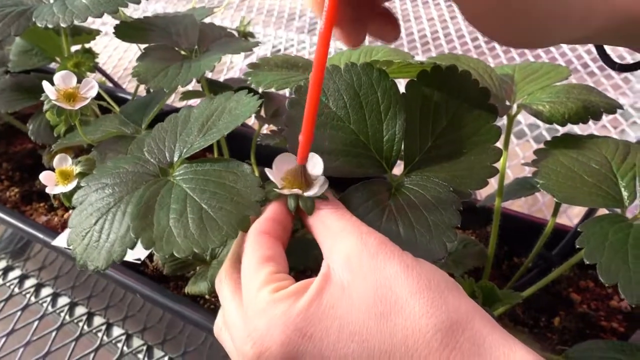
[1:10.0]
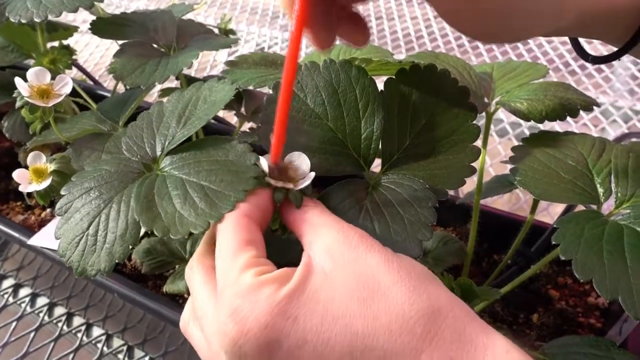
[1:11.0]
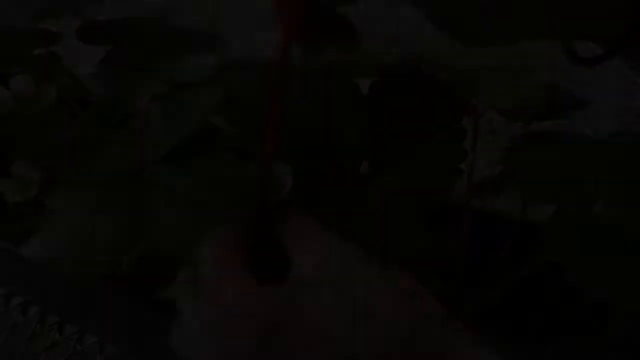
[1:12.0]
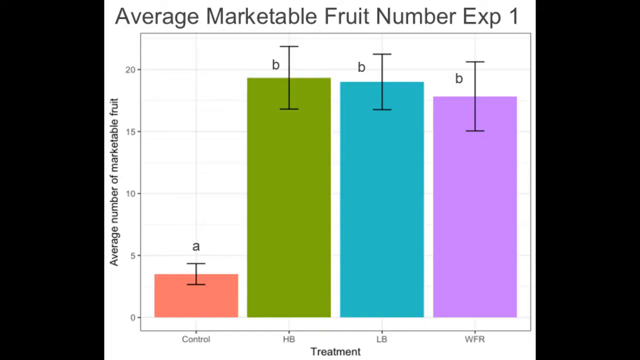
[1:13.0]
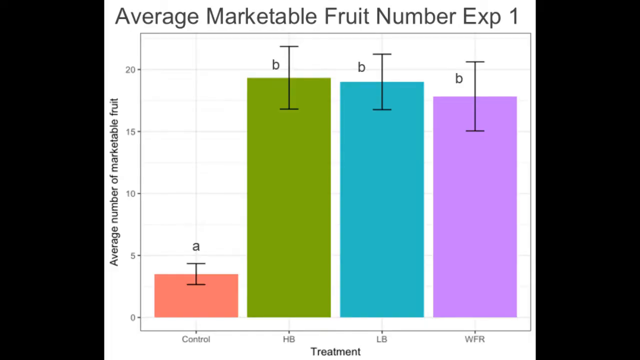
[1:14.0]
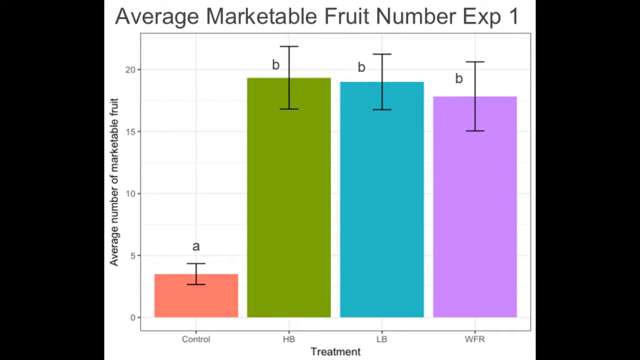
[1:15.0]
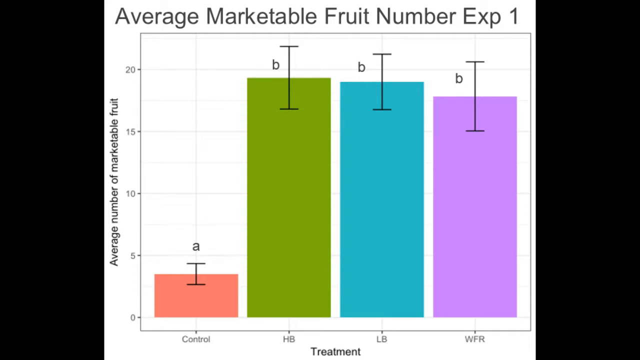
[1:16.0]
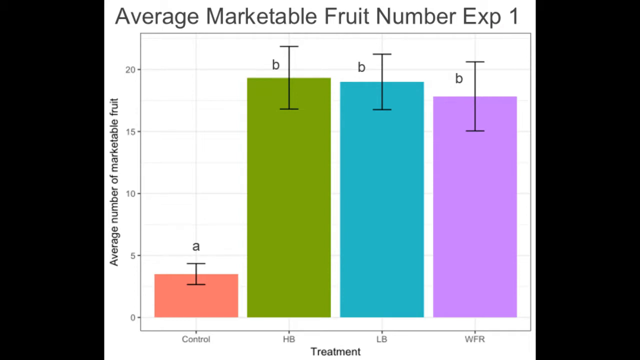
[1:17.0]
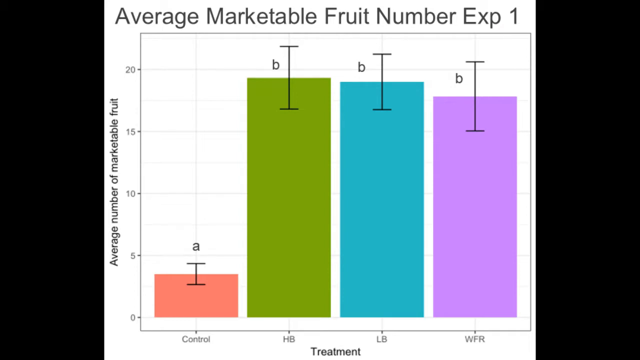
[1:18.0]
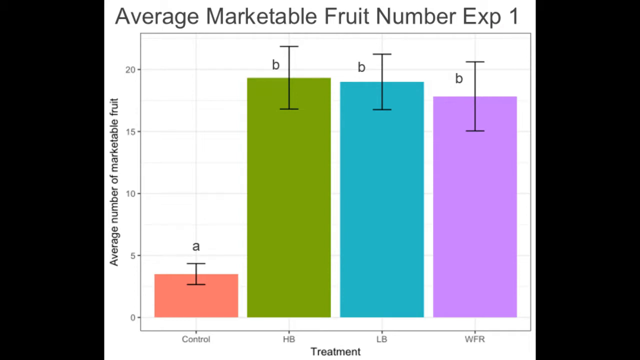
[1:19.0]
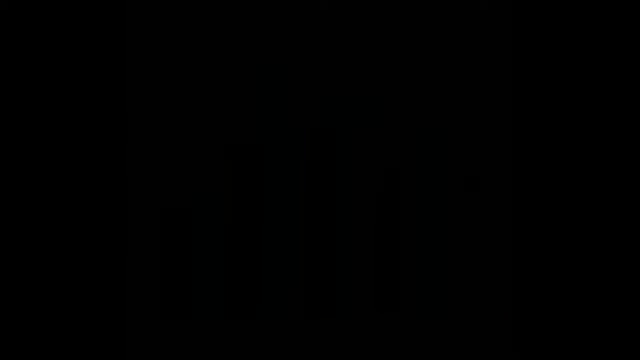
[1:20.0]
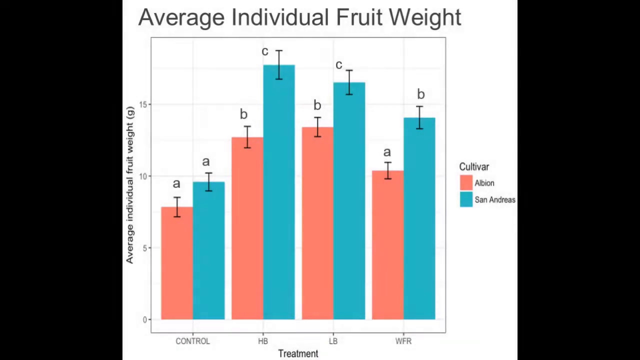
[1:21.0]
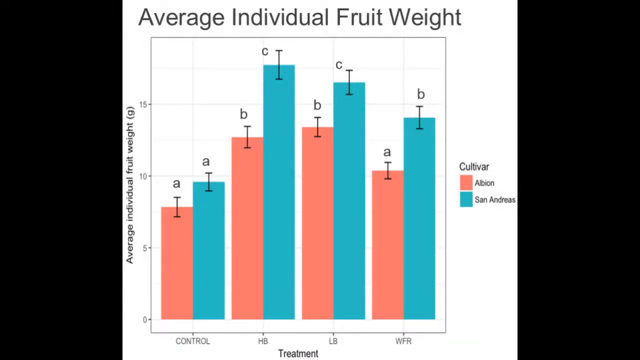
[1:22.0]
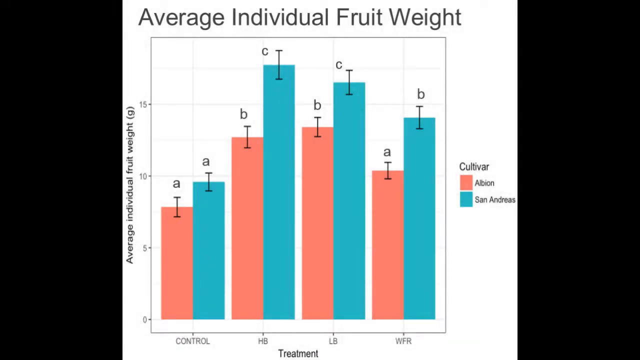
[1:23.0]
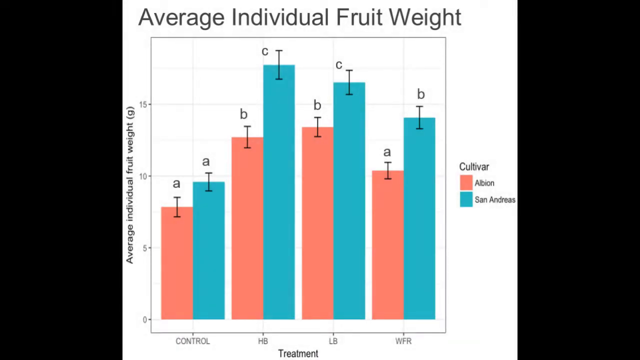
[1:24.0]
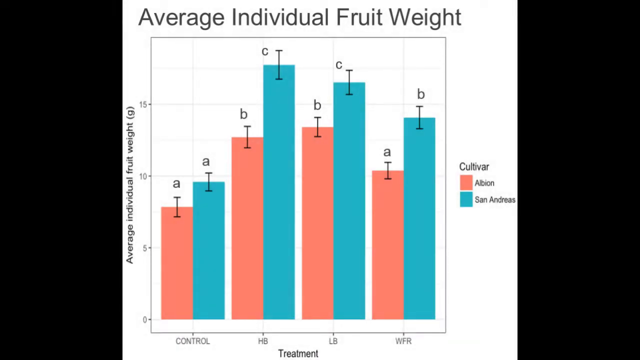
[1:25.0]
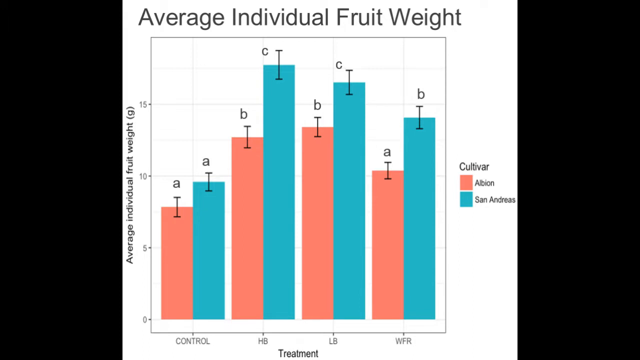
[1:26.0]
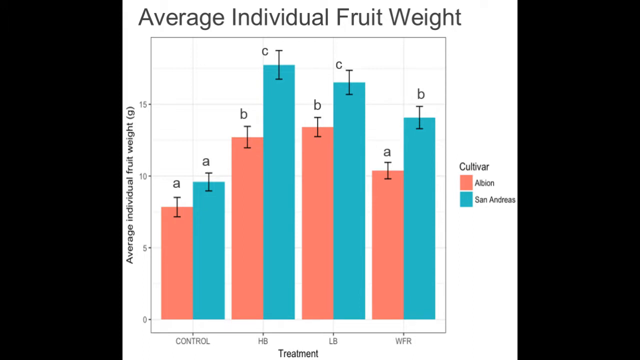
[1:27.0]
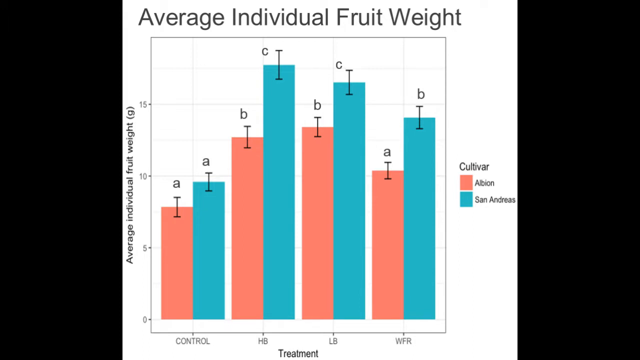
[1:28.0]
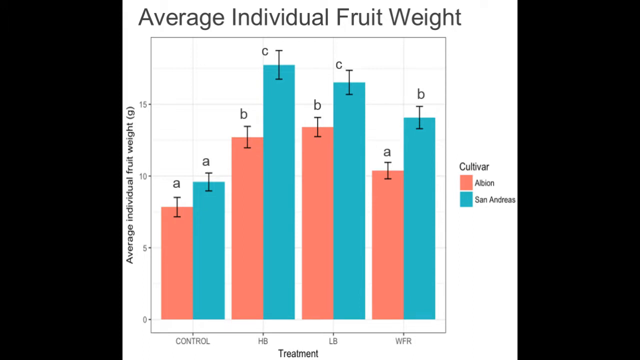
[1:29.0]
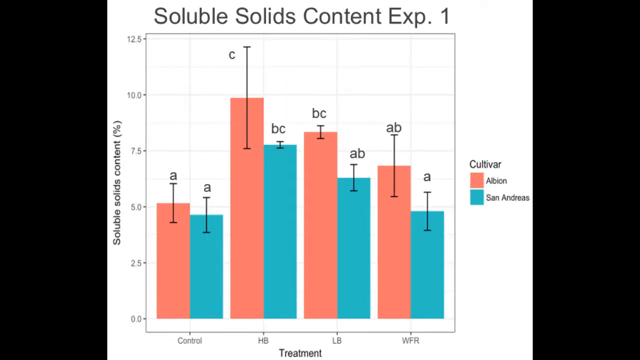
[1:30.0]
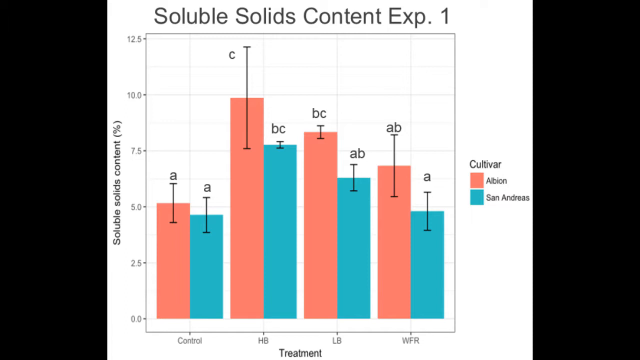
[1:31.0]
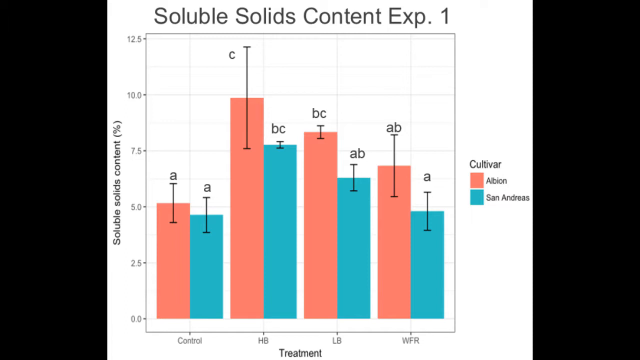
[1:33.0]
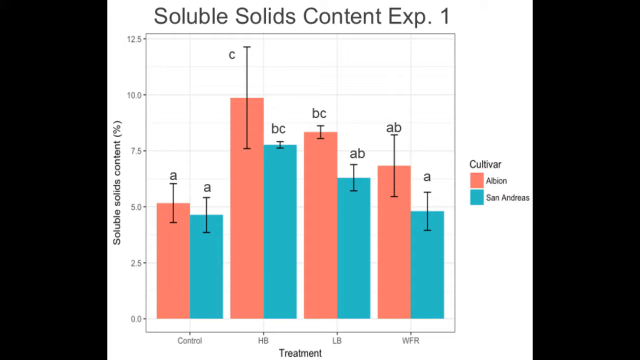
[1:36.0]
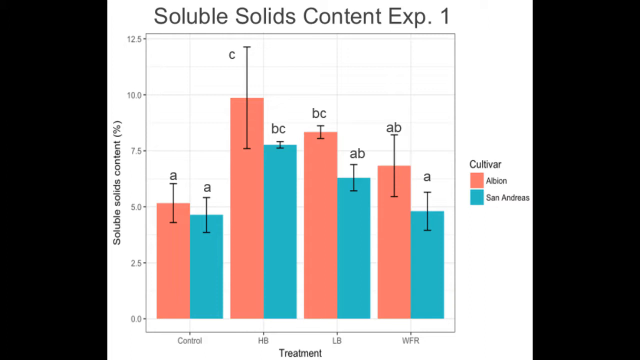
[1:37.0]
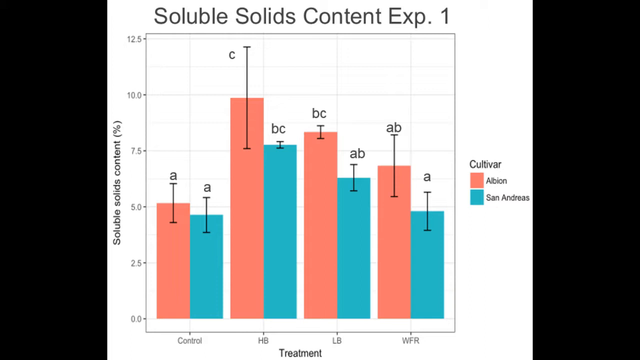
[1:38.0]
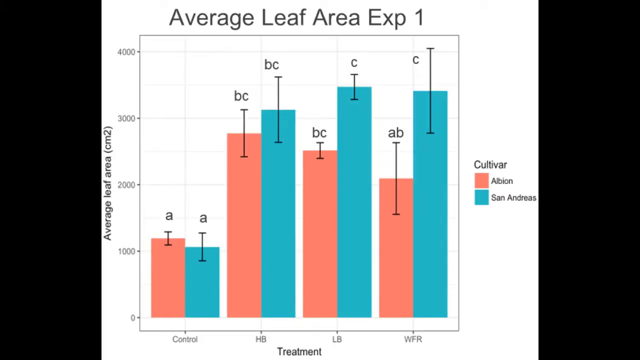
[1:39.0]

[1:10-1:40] One hand at the bottom holds the small white flower while another hand at the top right holds a very thin, vertical paintbrush and dabs the brush head onto the flower. The screen goes black, and a bar graph appears titled "Average marketable fruit number, experience 1." It has four bars: three tall bars on the right, colored green, blue and light purple, and a single very short bar on the left, light red to pink. The bottom reads "treatment" and the left side reads "average number of marketable fruit." The scene changes to another bar graph titled "Average individual fruit weight," with the same words on the left side and "treatment" at the bottom. It has four sections, each with two back-to-back bars, one light red and one blue. A key on the right titled "Cultivar" shows blue representing San Andreas and light red representing Albion.